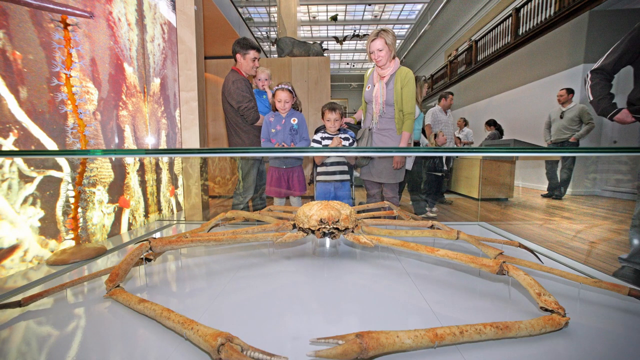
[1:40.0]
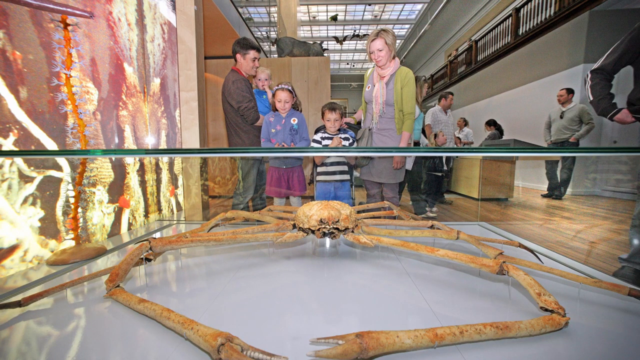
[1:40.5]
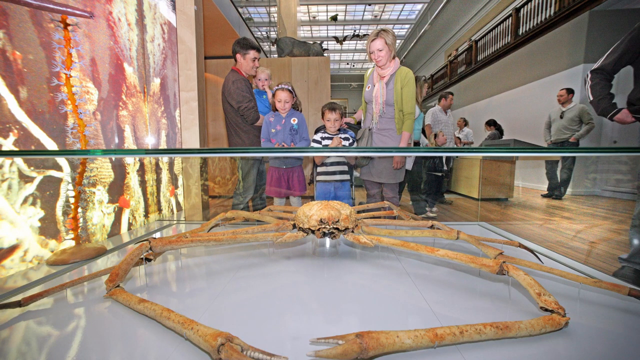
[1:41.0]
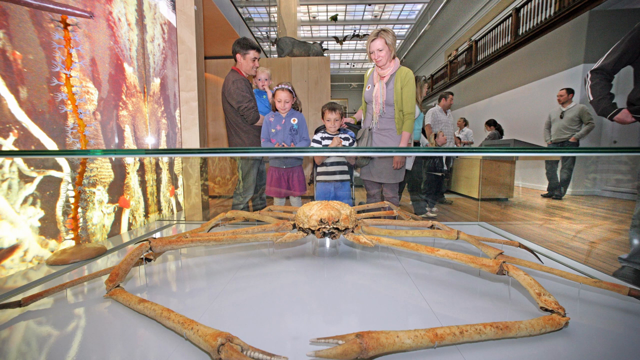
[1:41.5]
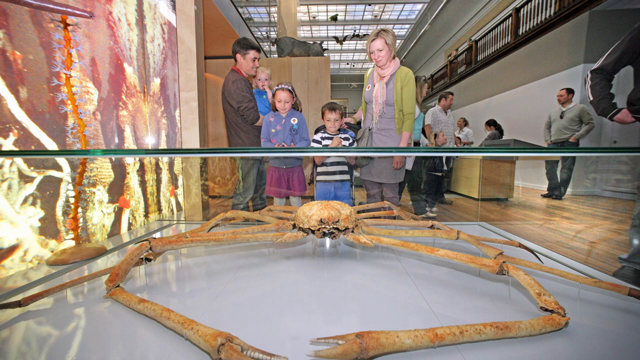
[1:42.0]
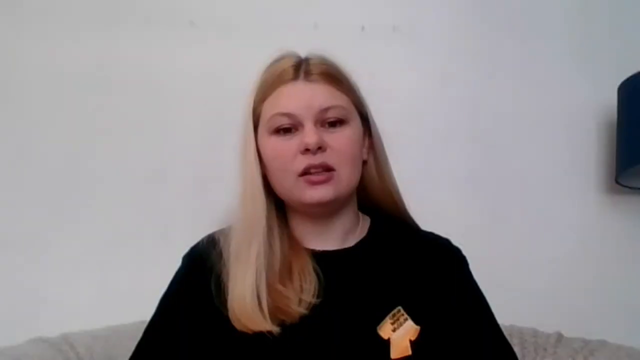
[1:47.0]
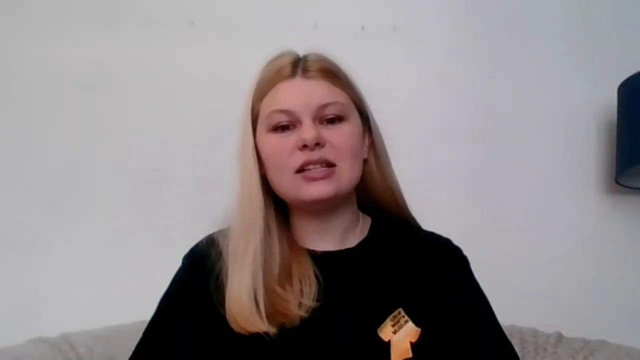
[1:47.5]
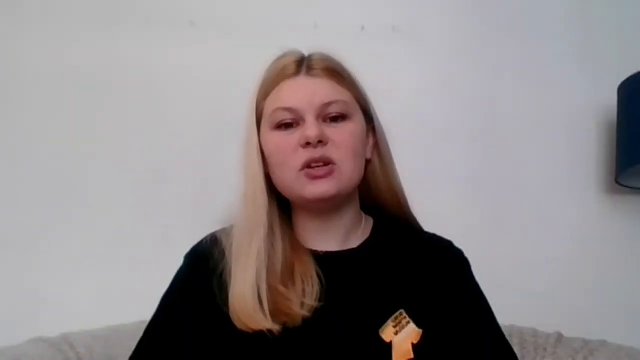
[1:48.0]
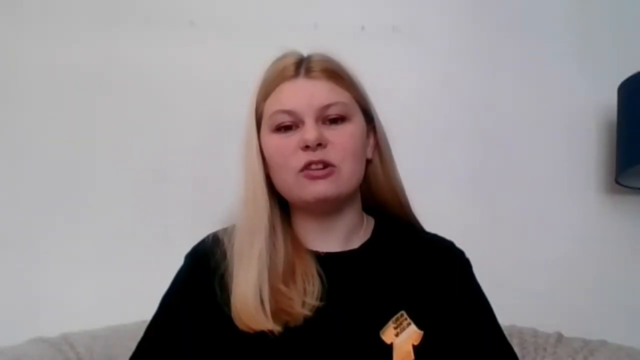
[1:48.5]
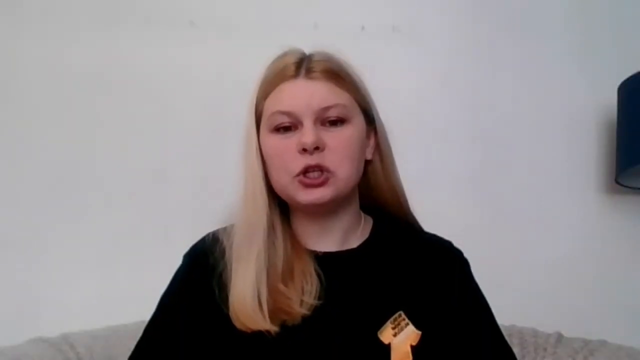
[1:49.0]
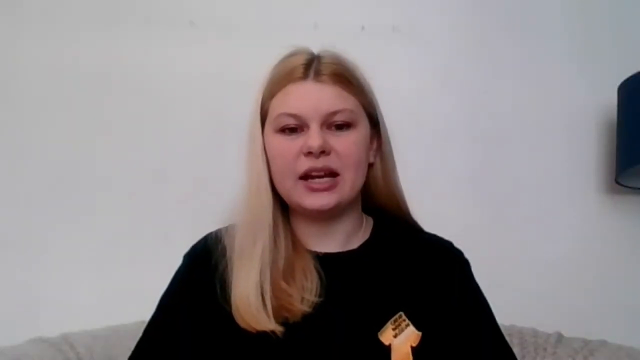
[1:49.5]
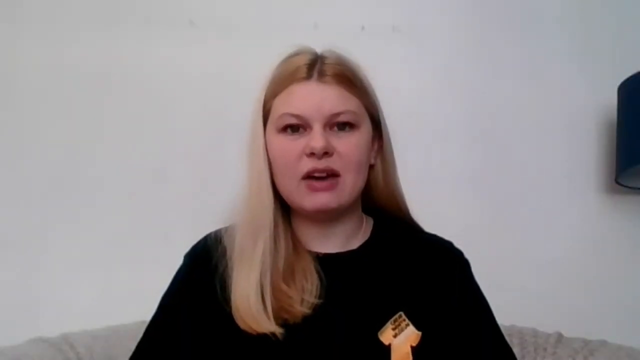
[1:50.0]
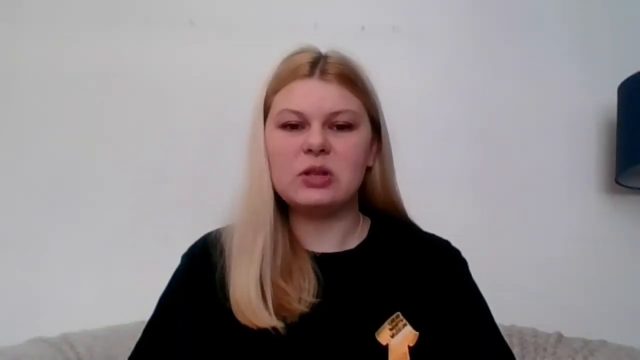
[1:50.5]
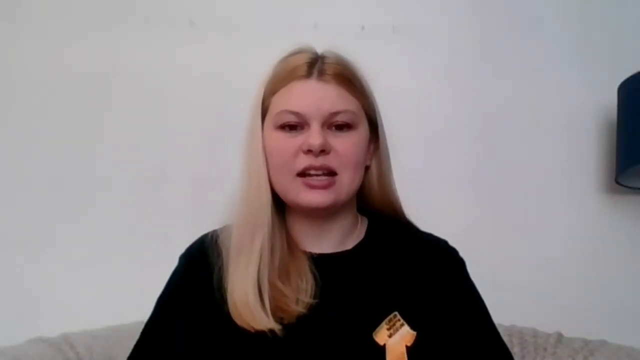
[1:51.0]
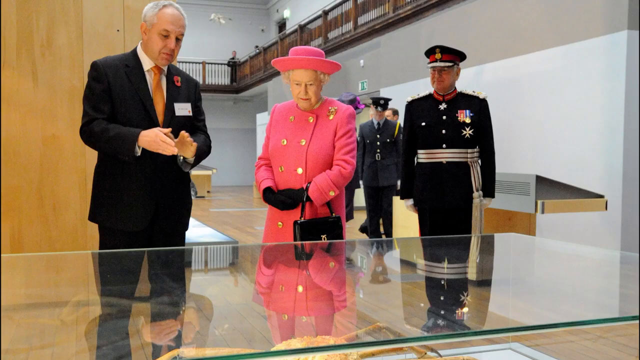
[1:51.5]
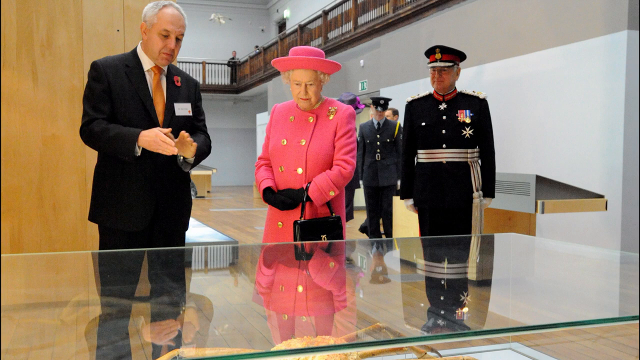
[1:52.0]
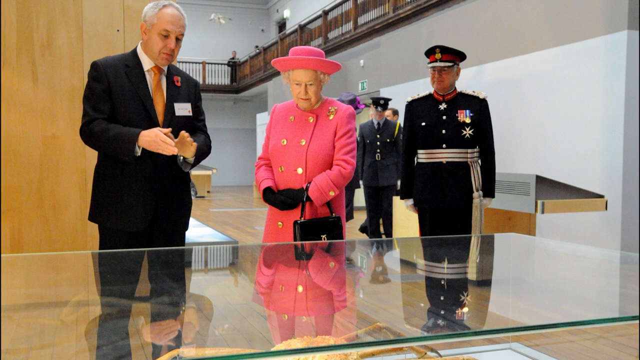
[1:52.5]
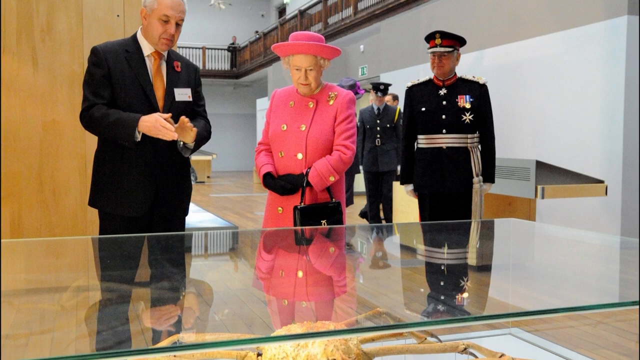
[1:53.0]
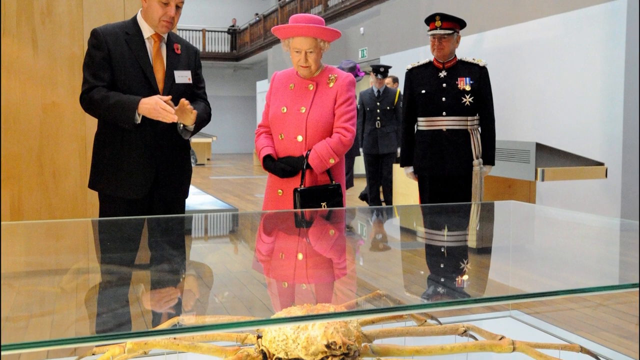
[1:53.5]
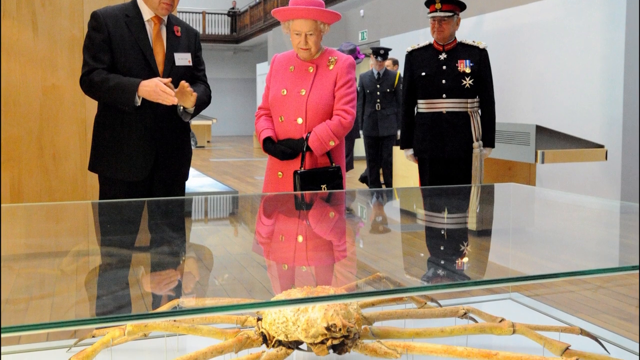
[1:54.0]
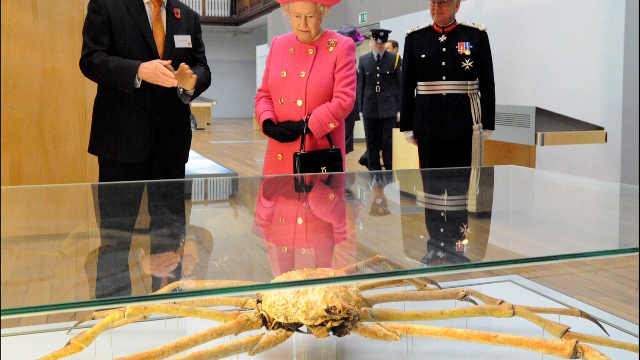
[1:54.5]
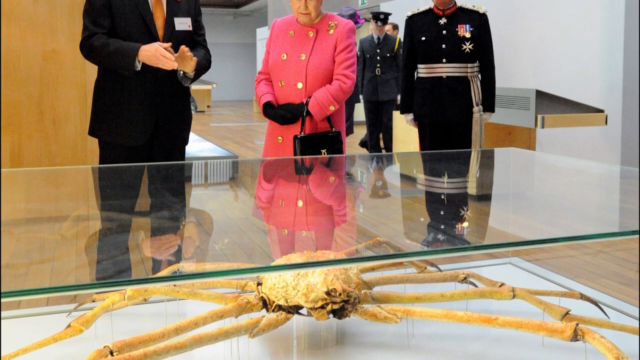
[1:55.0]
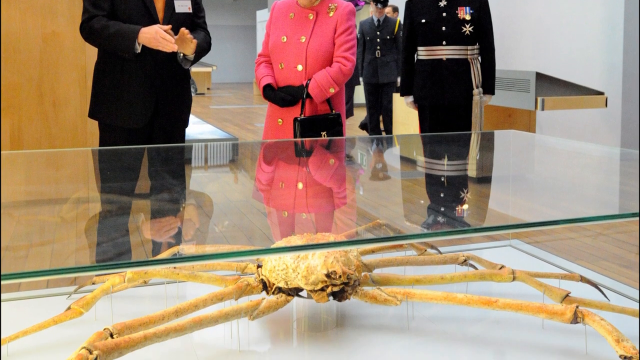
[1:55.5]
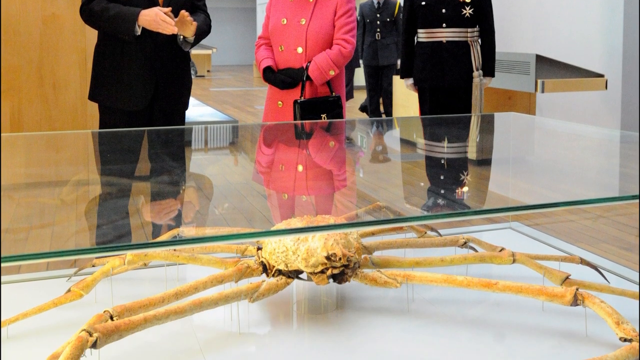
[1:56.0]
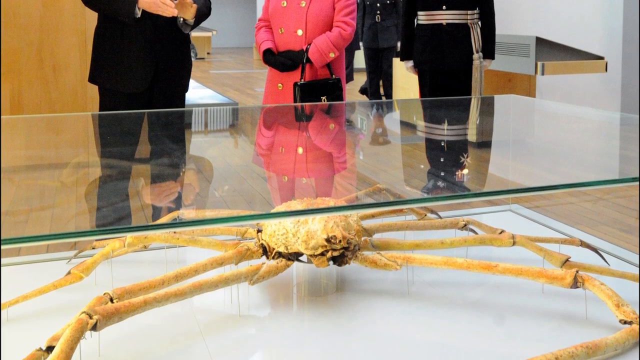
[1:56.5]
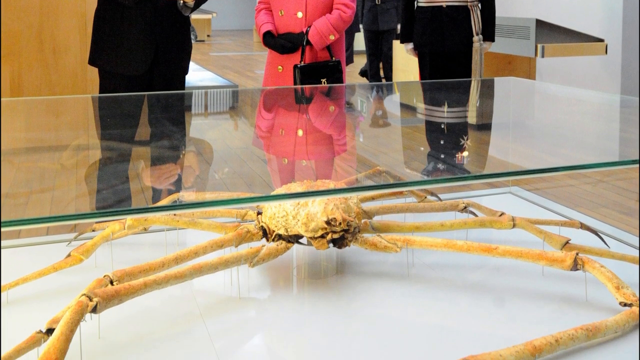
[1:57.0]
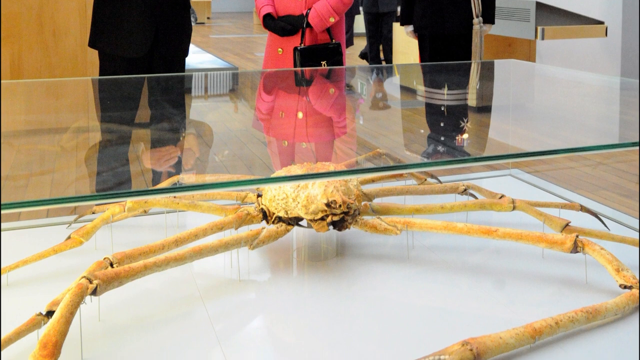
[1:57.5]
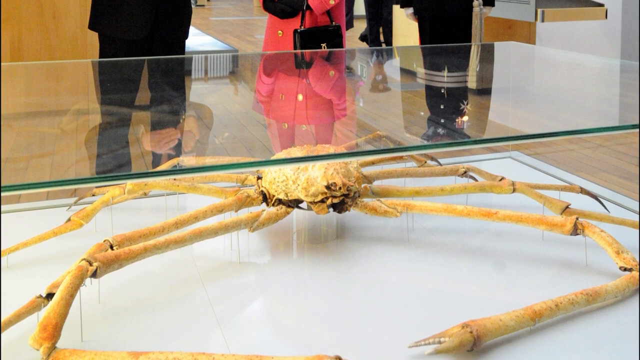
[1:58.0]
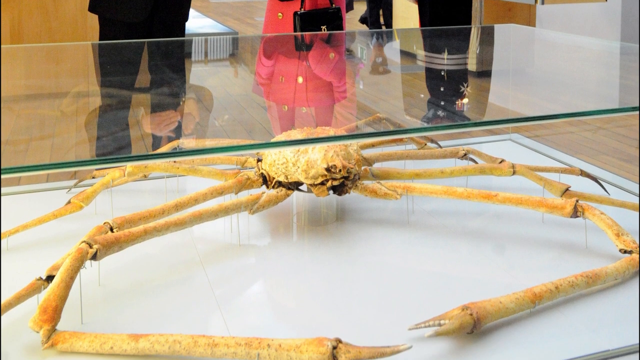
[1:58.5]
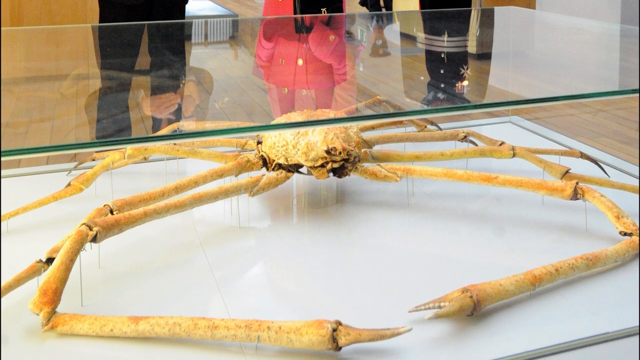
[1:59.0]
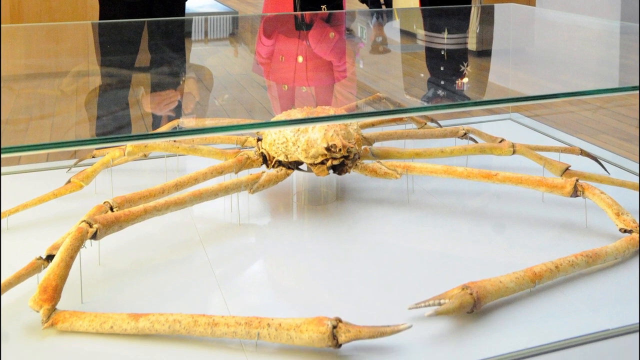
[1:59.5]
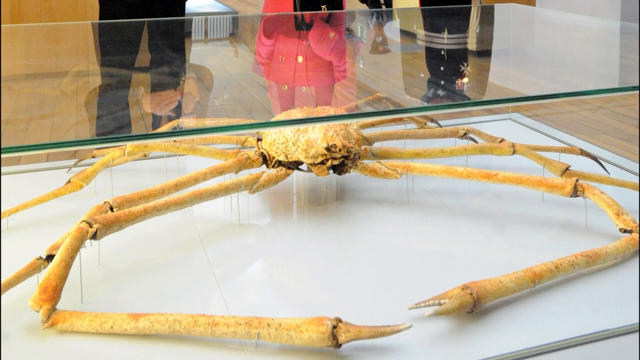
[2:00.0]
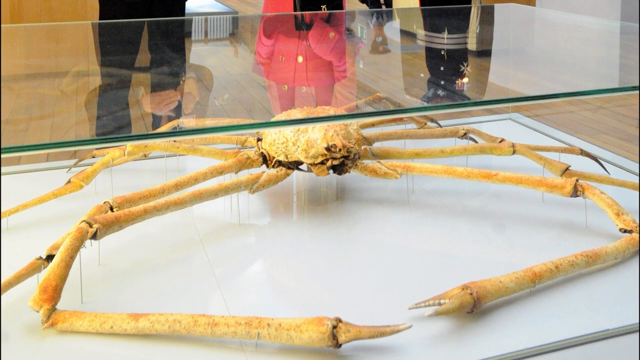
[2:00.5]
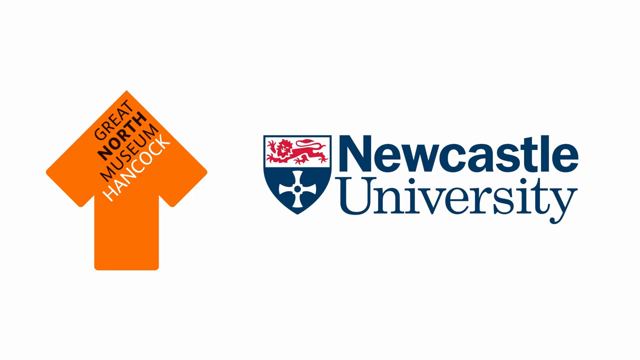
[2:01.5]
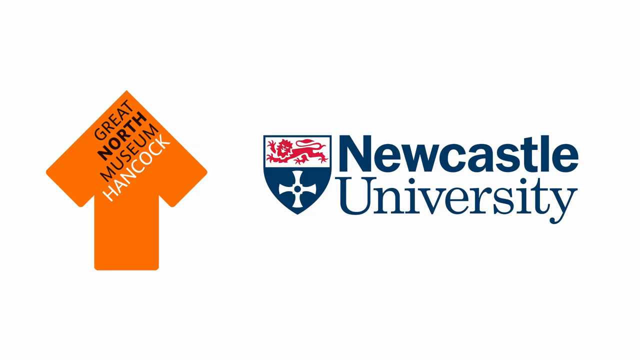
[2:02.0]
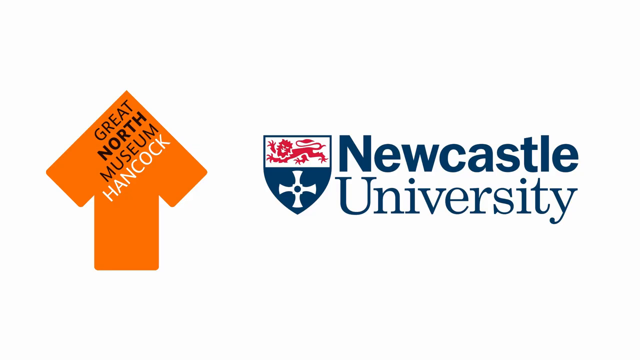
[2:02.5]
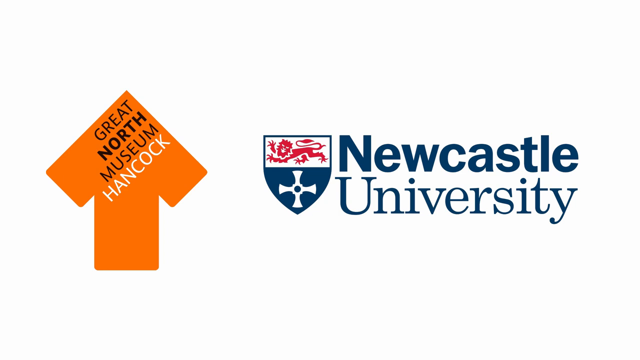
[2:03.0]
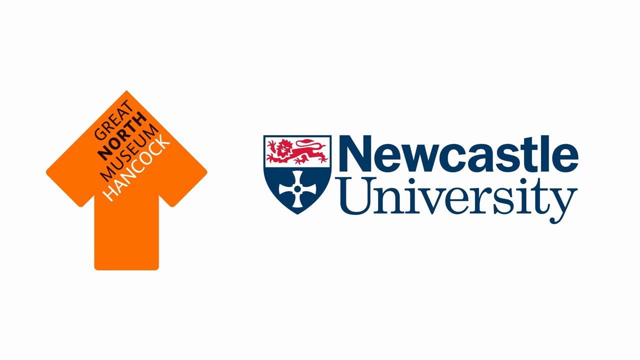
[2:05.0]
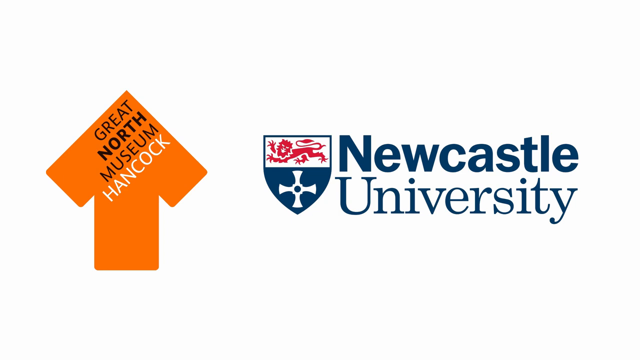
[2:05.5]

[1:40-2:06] The family is looking at the huge monster crab, with other people in the museum. The woman is shown talking. Then the museum apparently gets a royal tour: Queen Elizabeth appears in an all-pink jacket outfit with gold buttons and a gold brooch, wearing black gloves and carrying a black purse. A man directly in front of her but to the side wears an orange tie and a cream-colored collared shirt and looks like he is explaining something. A man in a royal military uniform stands at attention behind the queen, and a couple of other people in military uniforms are behind her, hard to make out. The military uniform is black with medals, and he wears a cover and a sash.